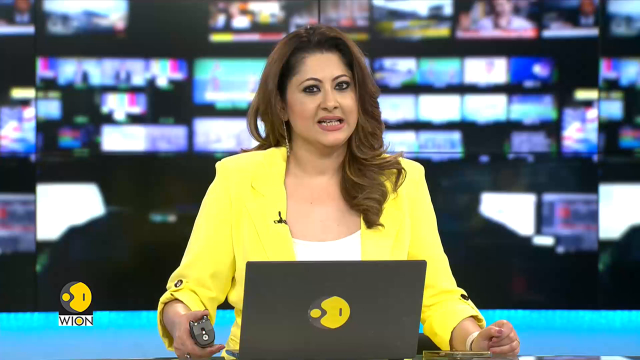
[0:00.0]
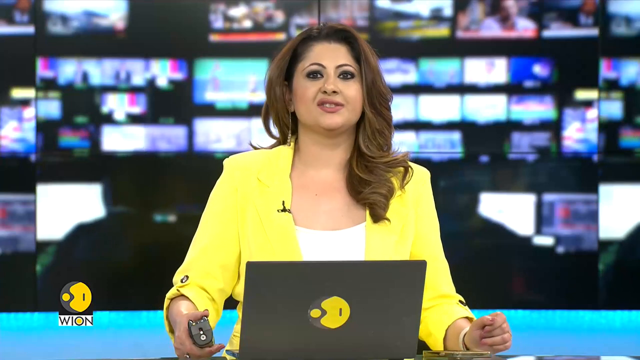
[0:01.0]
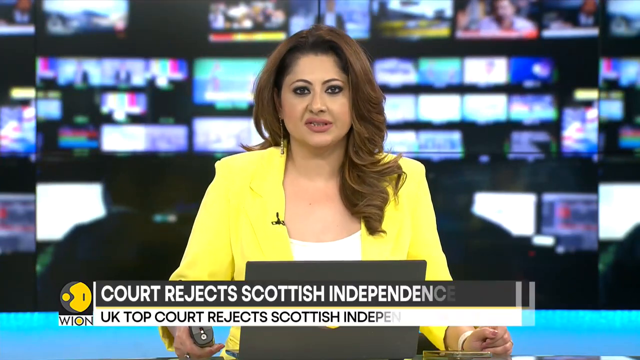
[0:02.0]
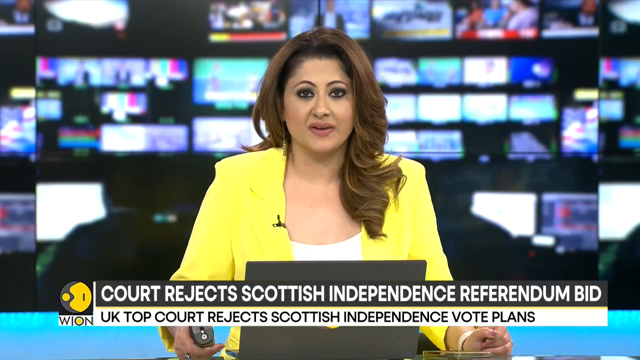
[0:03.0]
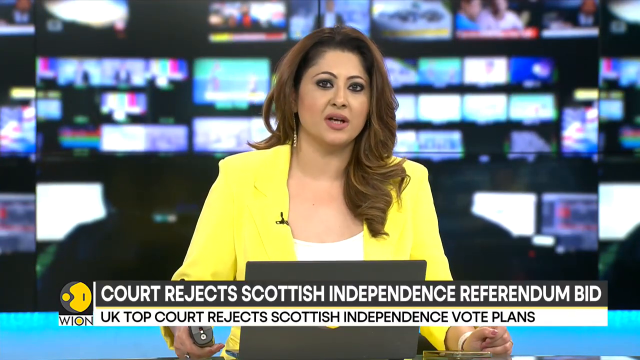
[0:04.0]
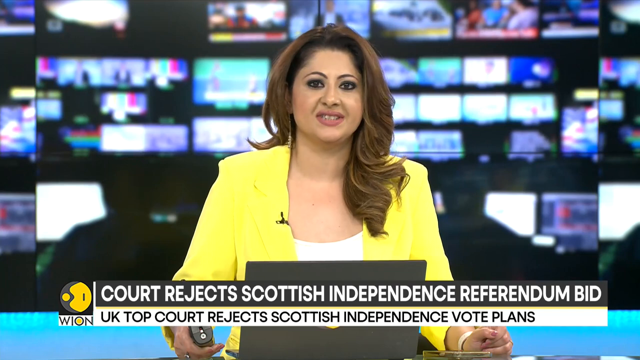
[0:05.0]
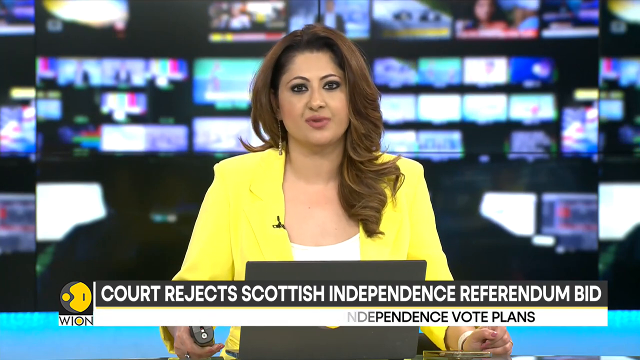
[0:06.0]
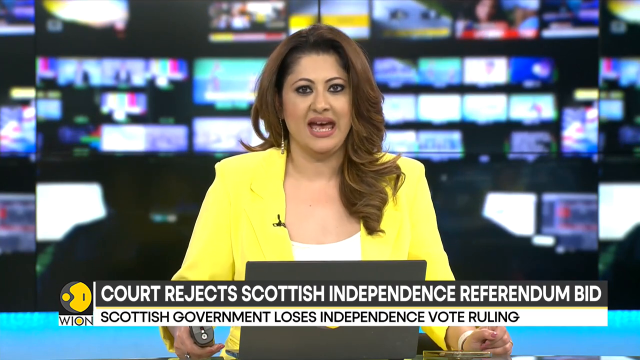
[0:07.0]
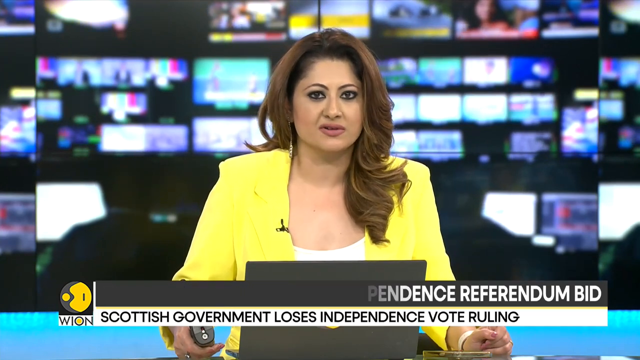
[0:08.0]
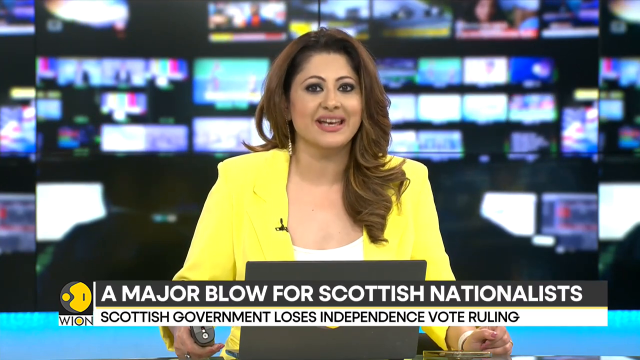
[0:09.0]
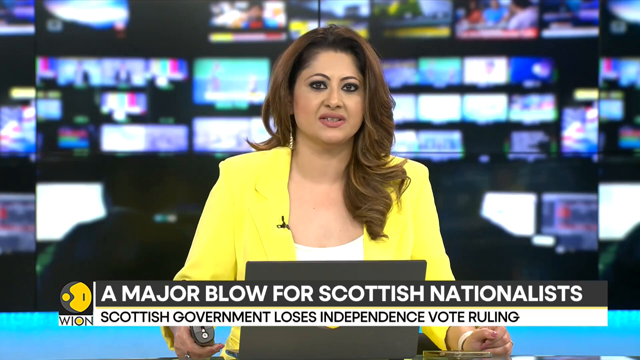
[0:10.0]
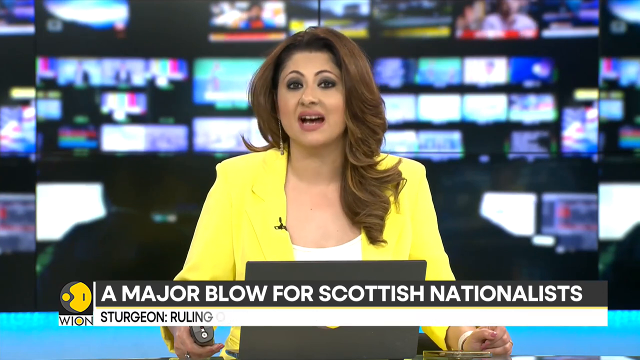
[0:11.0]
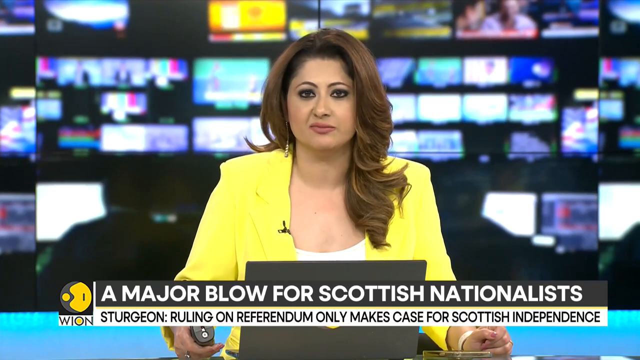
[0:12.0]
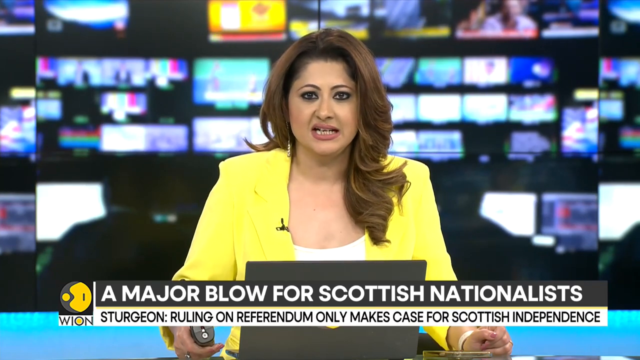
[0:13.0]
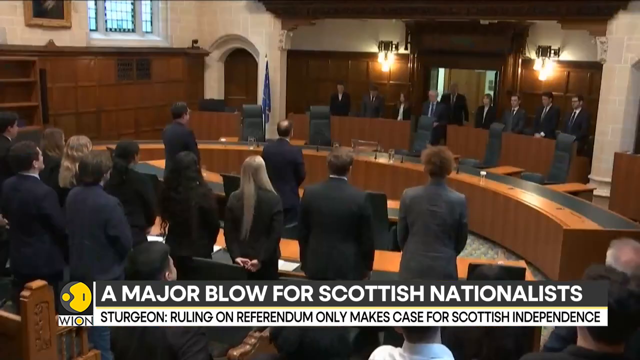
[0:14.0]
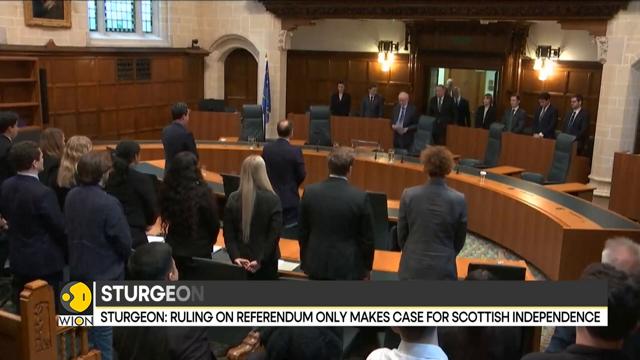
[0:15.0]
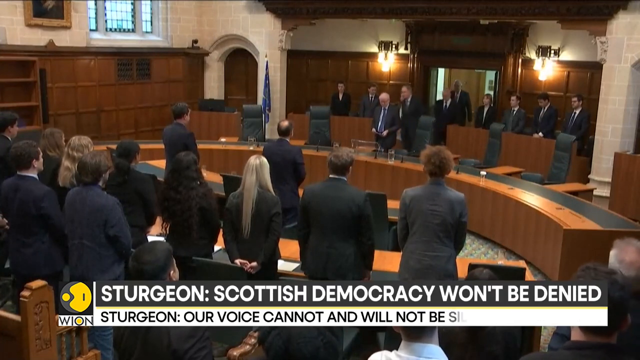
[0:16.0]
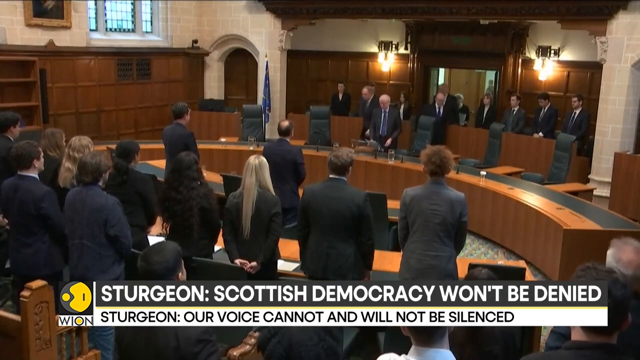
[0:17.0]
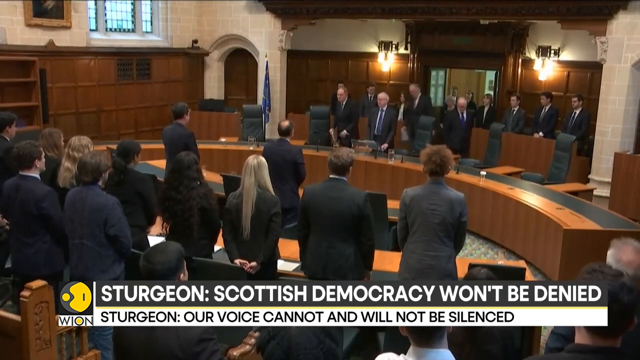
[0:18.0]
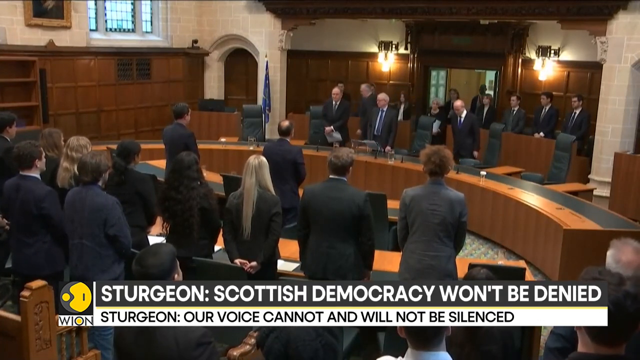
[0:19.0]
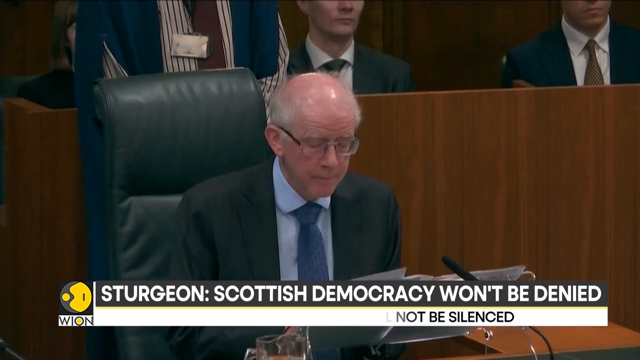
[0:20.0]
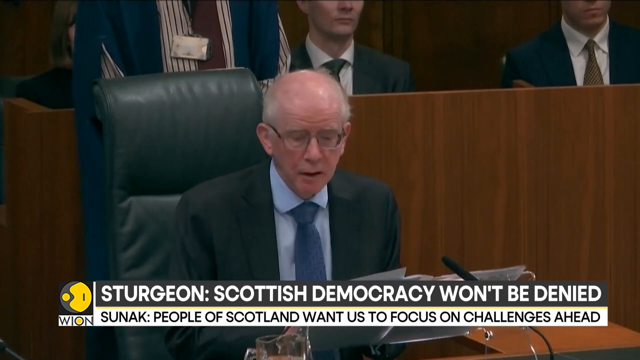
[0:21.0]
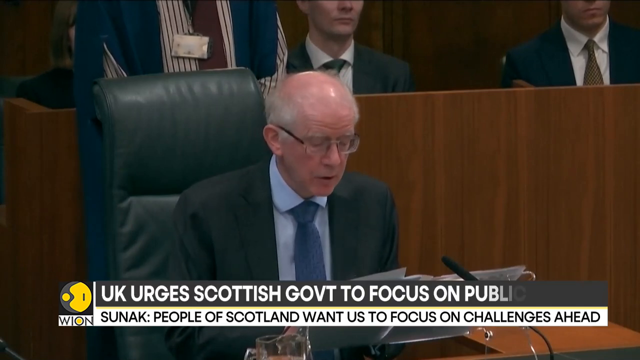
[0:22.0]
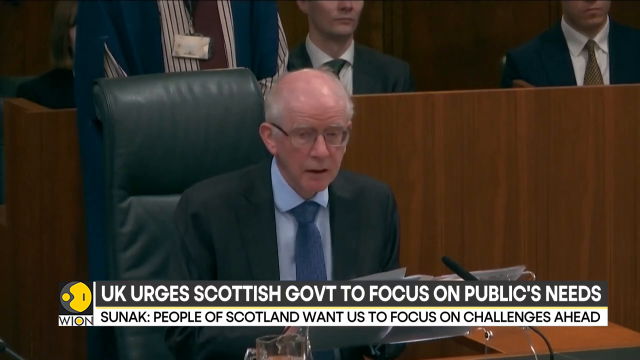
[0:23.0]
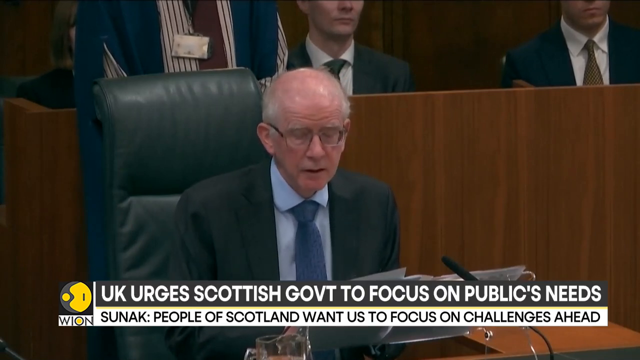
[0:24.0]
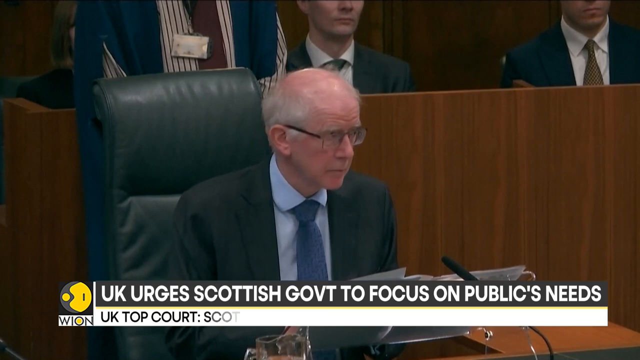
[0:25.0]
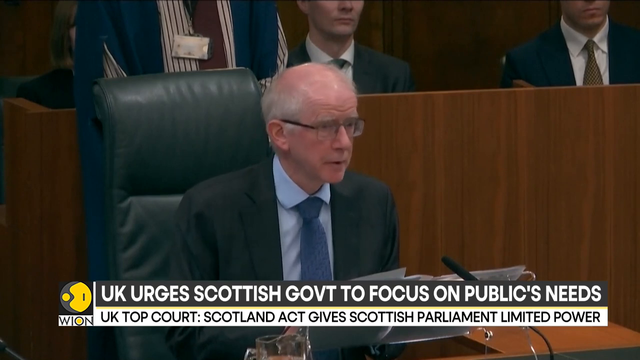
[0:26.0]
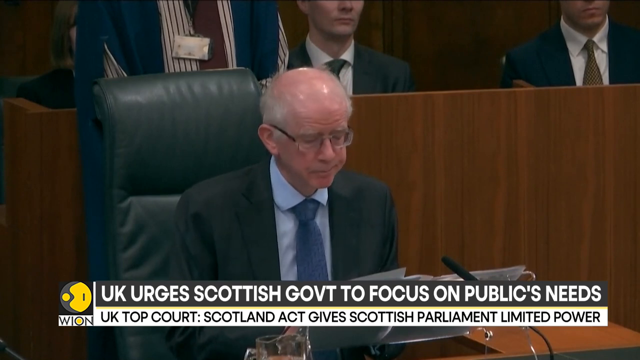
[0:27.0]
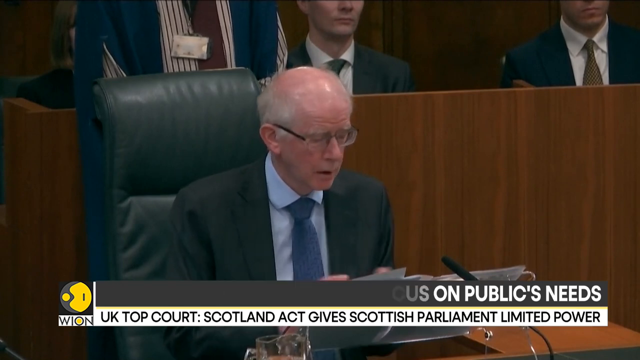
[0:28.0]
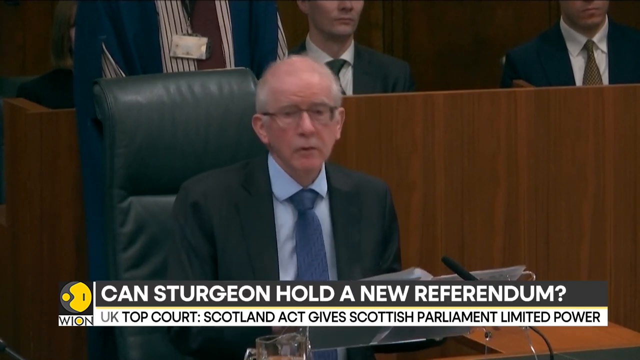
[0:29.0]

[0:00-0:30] A woman, presumably in her 40s, appears first. She wears a yellow blazer and a white camisole, has an olive complexion, thin eyebrows, some mascara, and long brown wavy hair. She is surrounded by a bunch of TVs. A banner appears reading "a major blow for Scottish nationalists, the Scottish government loses independence vote ruling." The next scene shows a group of people in black suits standing up, in what seems to be some type of parliament or congress. Another banner reads "UK urges Scottish government to focus on the public's needs." Above the banner is an old balding man, presumably in his 60s or 70s, who seems to be wearing a blue blazer, a light blue shirt, a blue tie and glasses. He seems to be saying something.